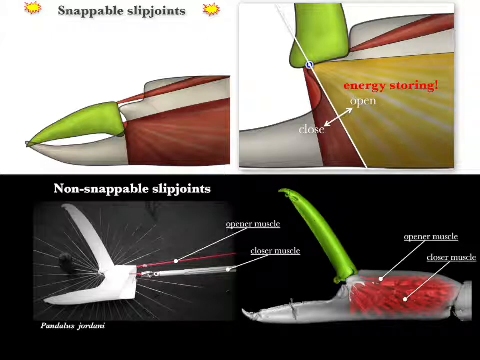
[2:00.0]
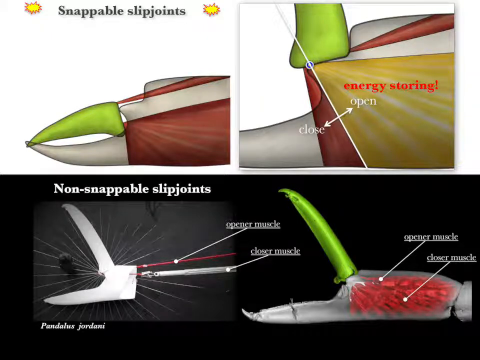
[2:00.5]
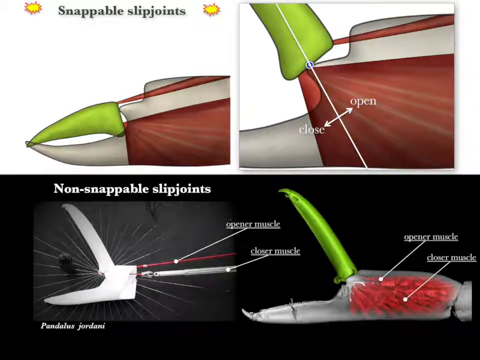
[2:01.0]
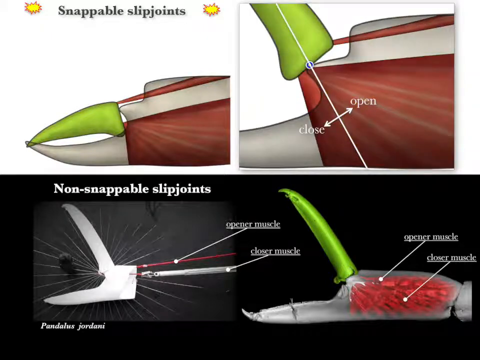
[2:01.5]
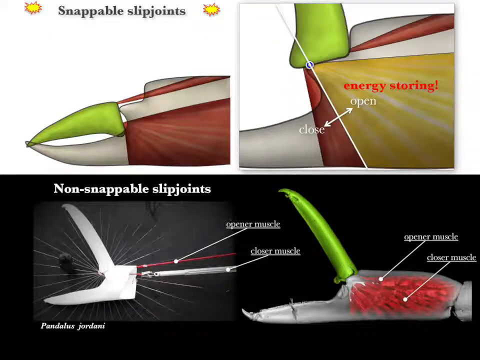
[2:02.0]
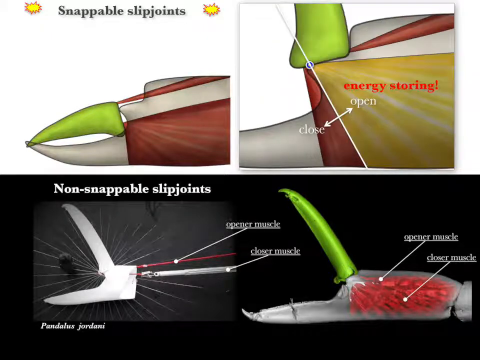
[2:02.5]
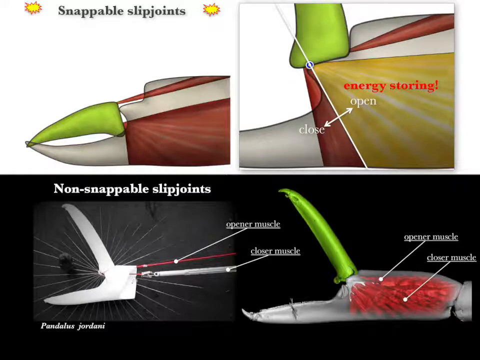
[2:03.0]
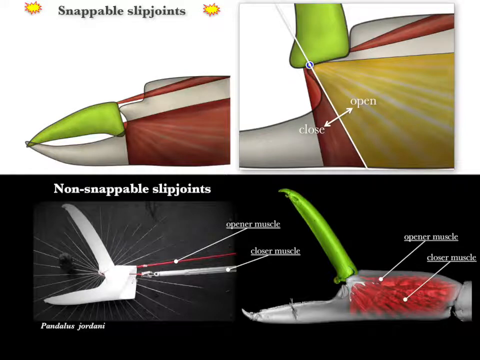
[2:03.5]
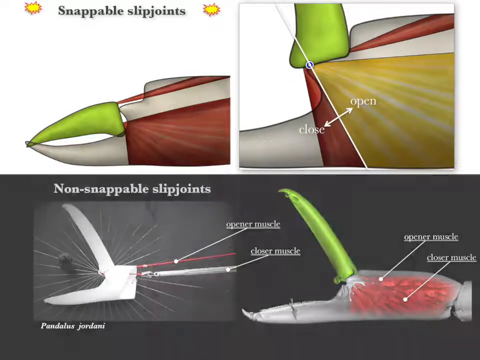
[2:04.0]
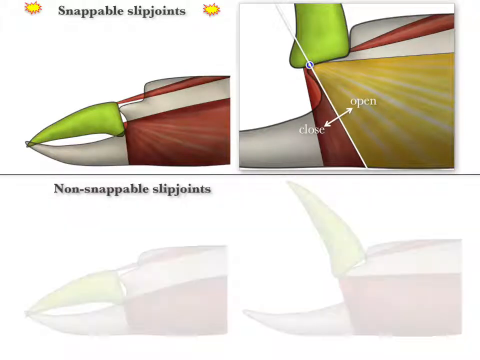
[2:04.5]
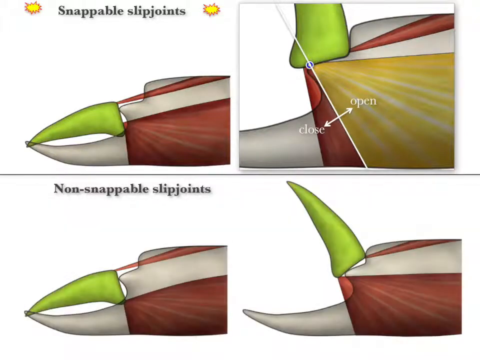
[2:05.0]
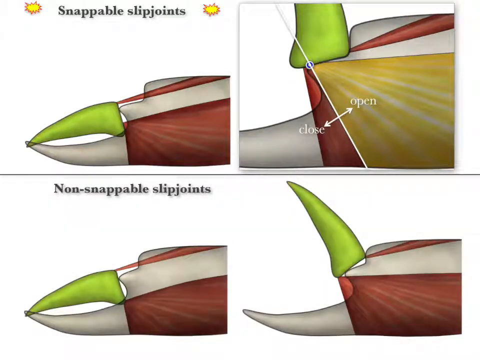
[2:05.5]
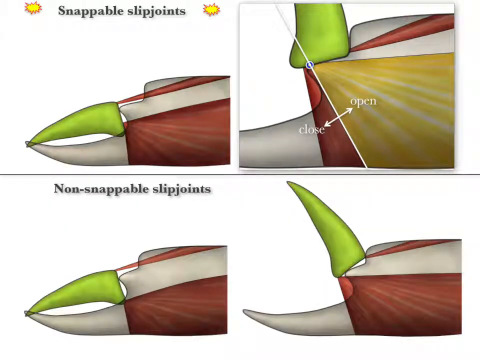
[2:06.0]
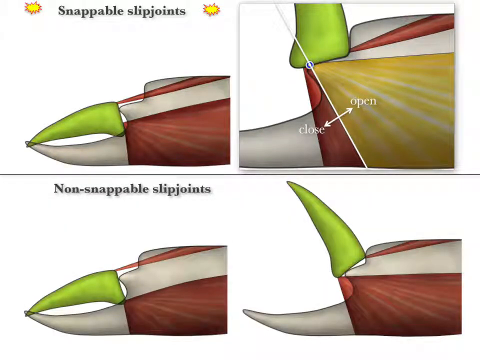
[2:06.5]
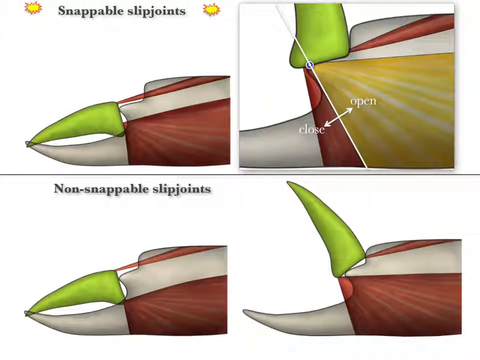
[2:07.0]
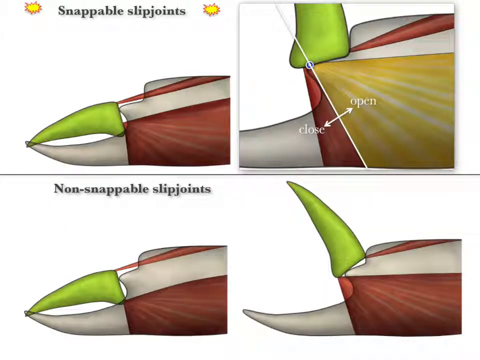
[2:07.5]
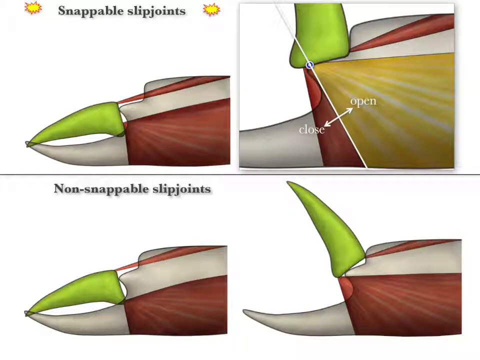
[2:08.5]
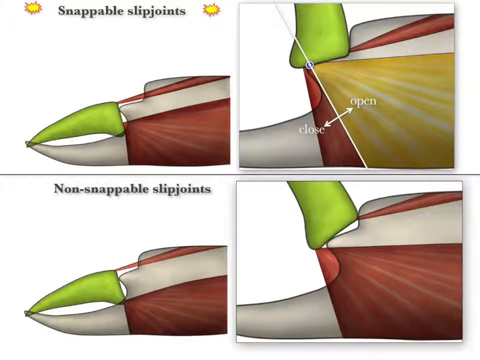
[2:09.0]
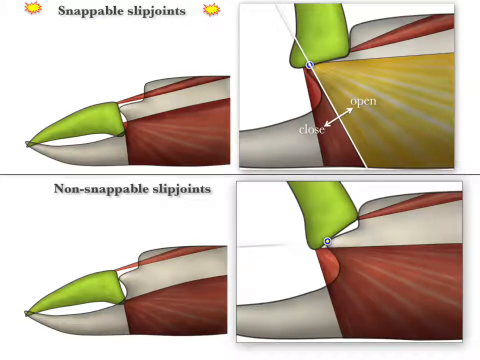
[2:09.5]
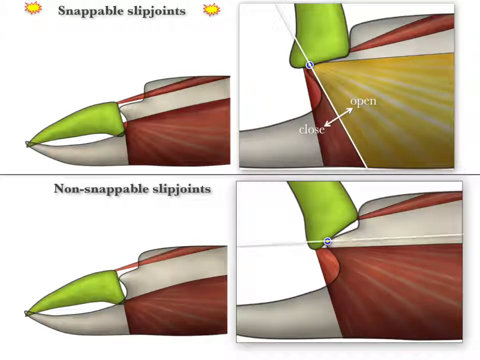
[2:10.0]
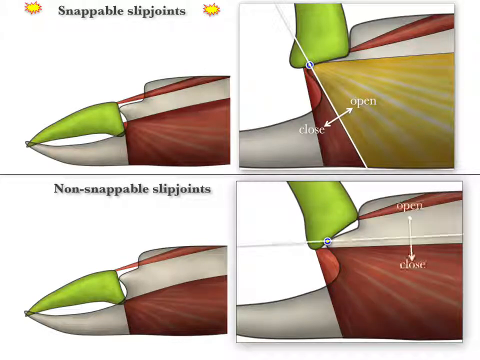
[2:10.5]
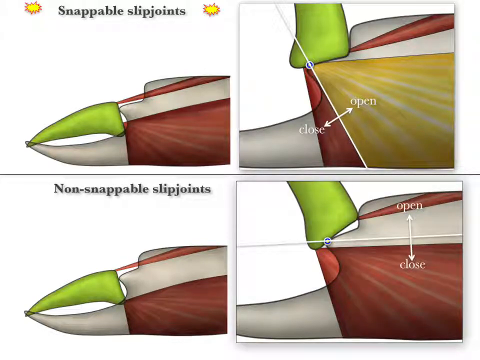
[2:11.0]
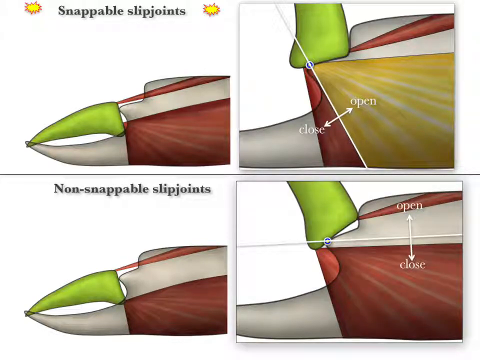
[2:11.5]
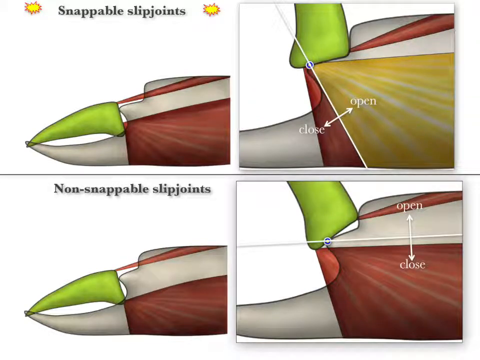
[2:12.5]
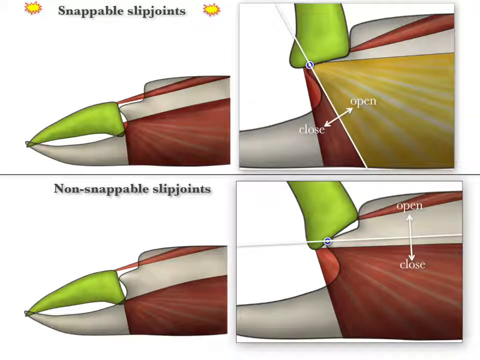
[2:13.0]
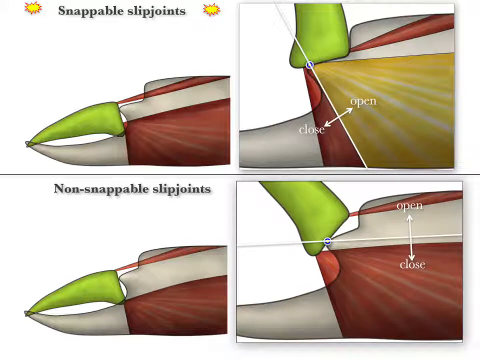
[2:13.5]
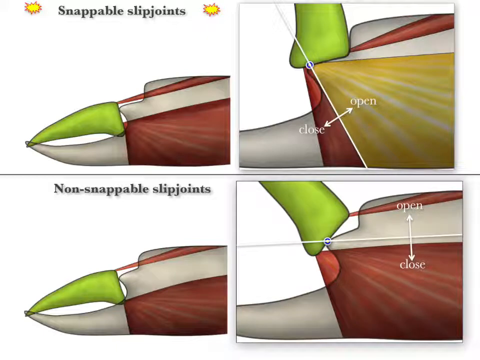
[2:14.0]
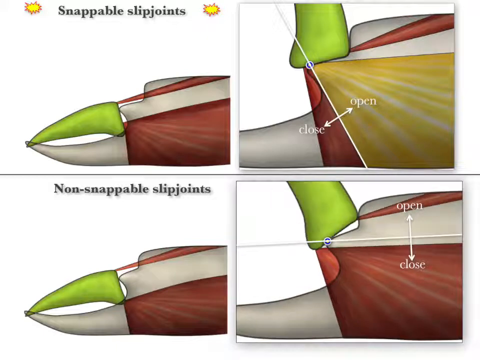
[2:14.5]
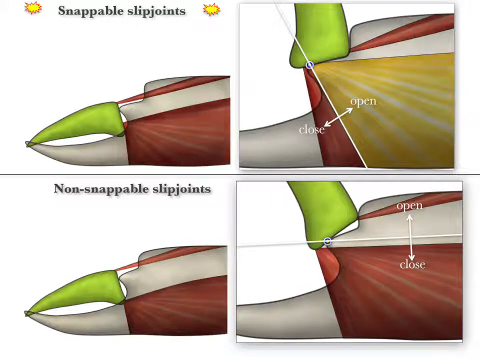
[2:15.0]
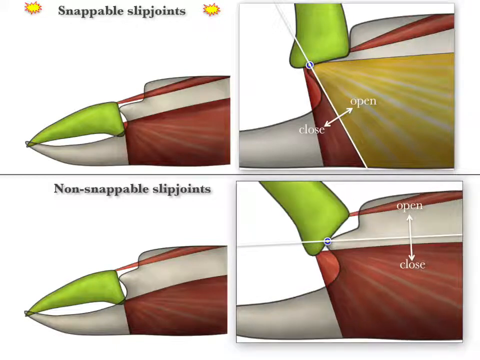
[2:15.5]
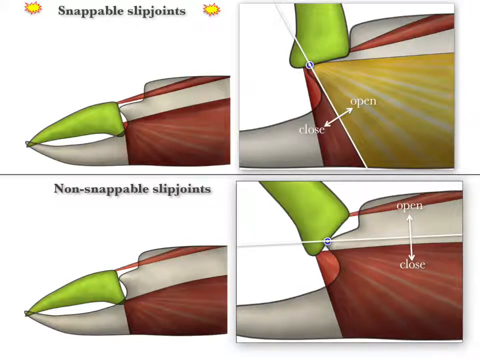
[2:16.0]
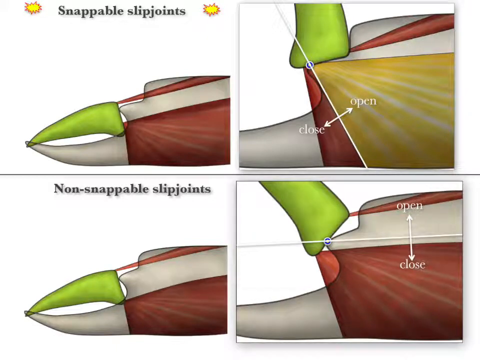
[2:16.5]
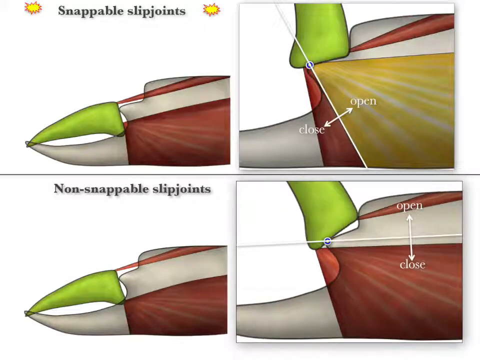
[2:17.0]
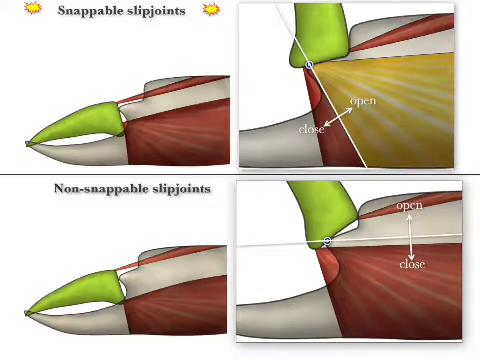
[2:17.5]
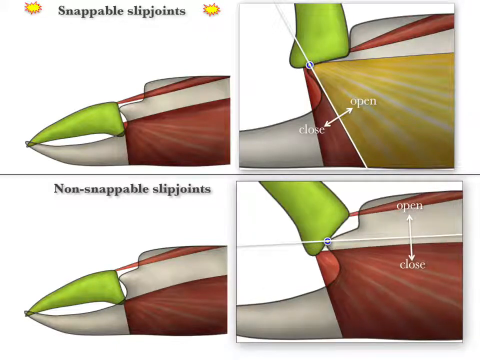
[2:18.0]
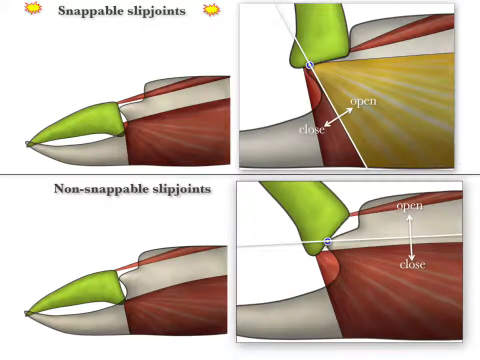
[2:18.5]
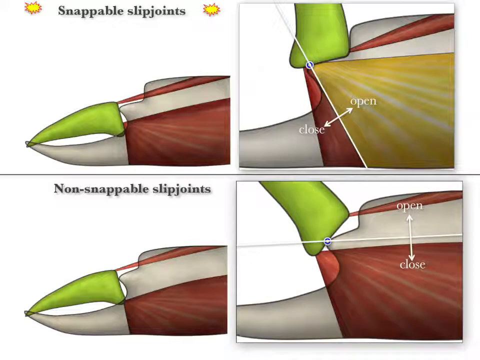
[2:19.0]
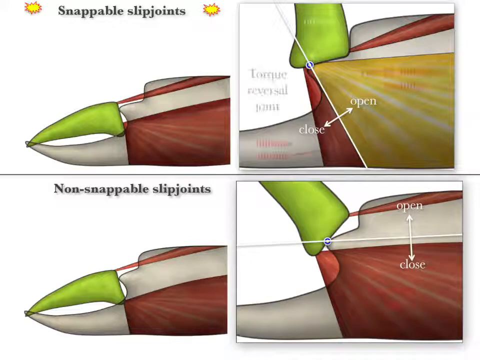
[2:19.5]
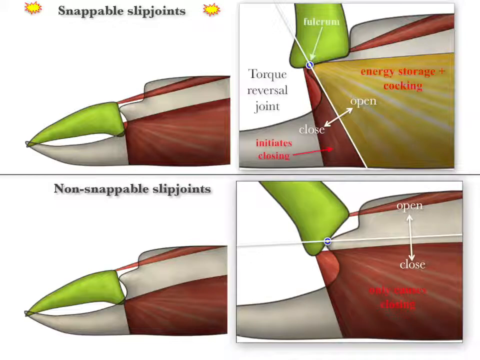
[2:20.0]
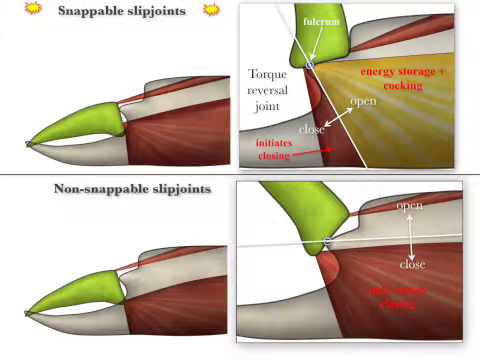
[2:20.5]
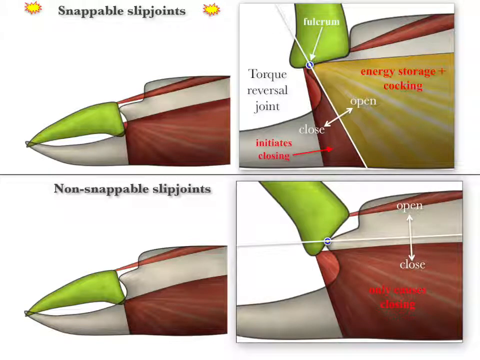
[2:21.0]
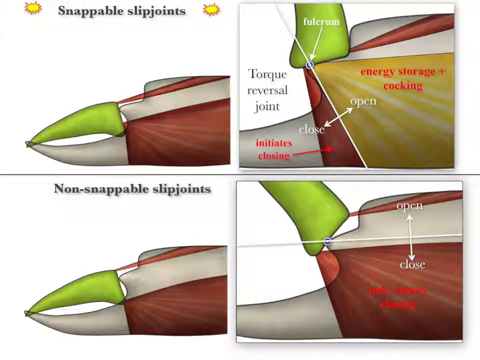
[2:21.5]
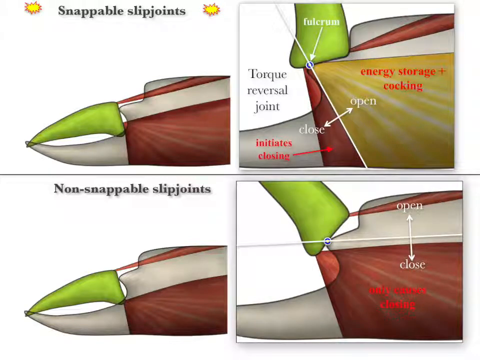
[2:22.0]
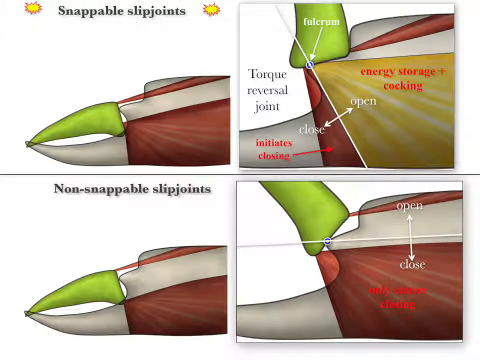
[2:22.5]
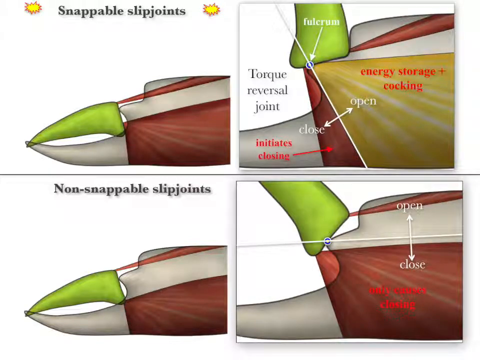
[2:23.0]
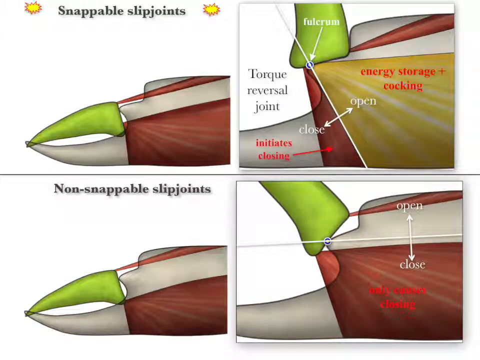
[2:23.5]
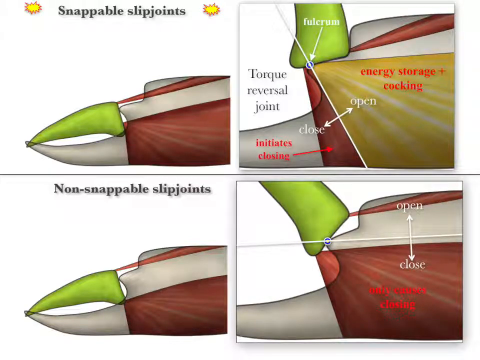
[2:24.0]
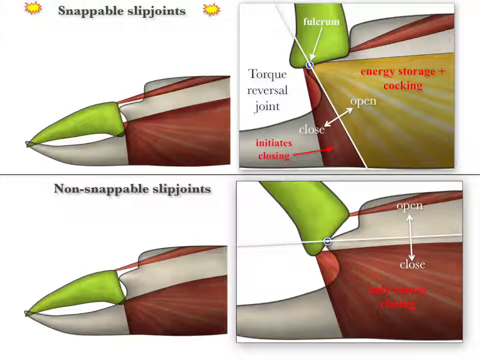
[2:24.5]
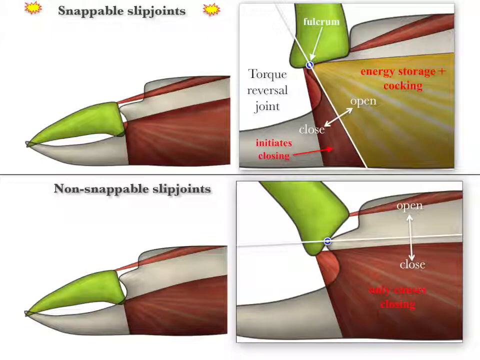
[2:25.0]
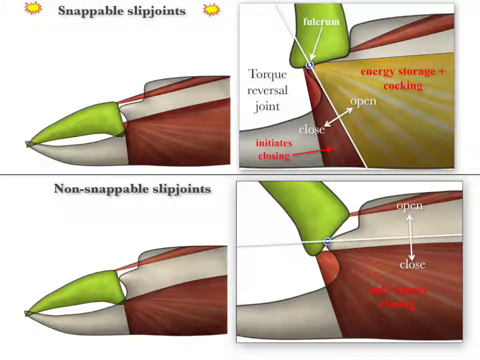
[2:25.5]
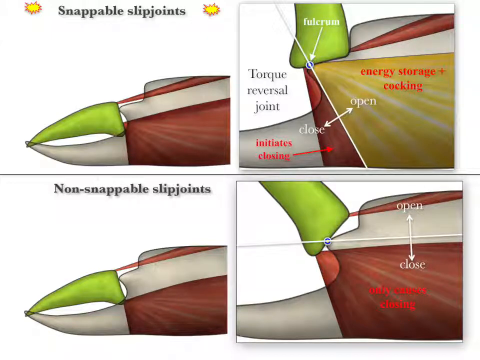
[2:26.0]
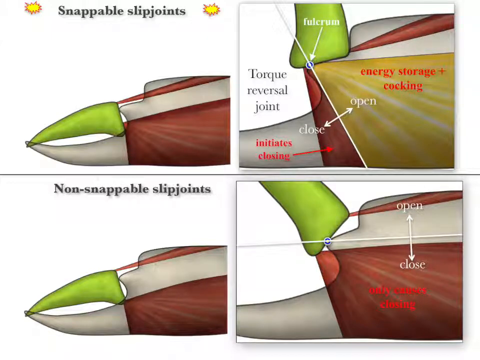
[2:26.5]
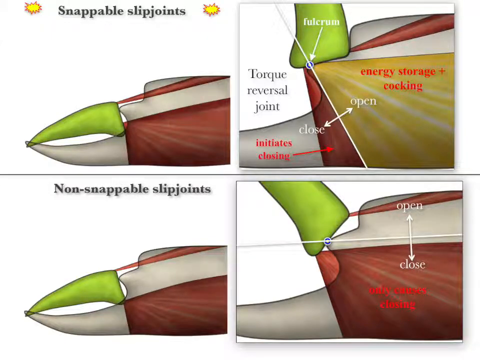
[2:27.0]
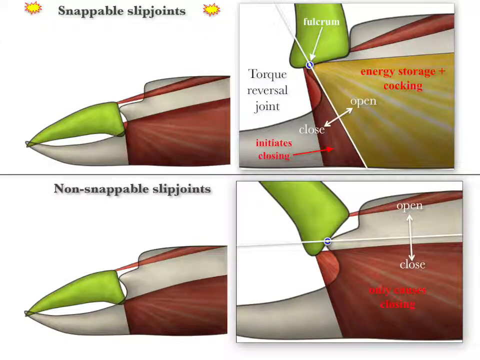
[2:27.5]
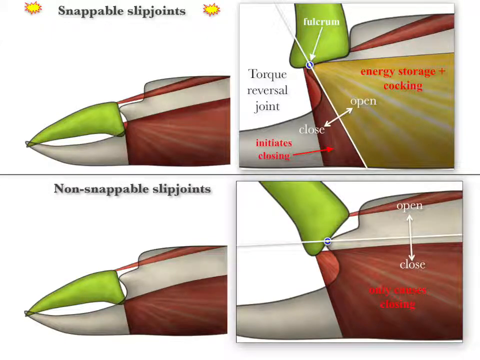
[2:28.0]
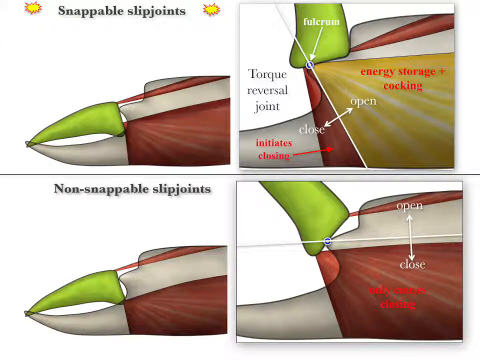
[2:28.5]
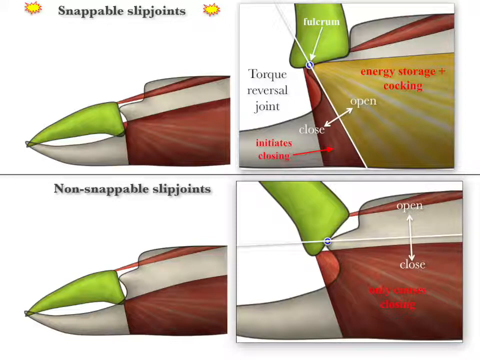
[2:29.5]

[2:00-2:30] The focus stays on the same pinchers. The one on the left changes: the green pincher on top moves forward a little, and a white line comes down with an arrow about one third from the bottom pointing up and down. Beside the arrow pointing down is "closed", and the one above it says "open". The bottom portion is now red where it was yellow before. It then opens back up, and from the top down about three quarters of it is back to the yellowish color, as "energy storage" flashes up. More diagrams appear on the bottom for non-snappable slip joints, showing how it opens and closes, with a line going across and the muscles and tendons changing, as in the top one. More text comes into the top one: the green portion, the gray portion, the center and the other portions all get lettering describing the different parts. The bottom one then shows two different cutaway diagrams of the non-snappable joint.